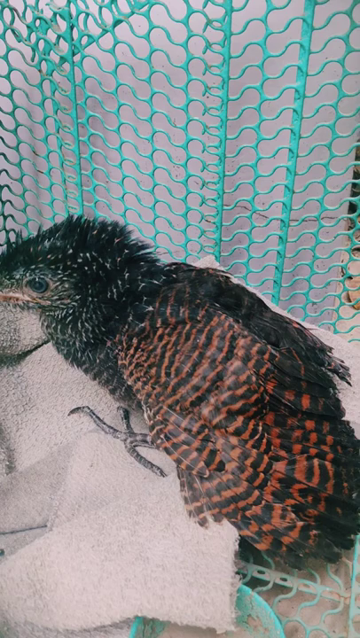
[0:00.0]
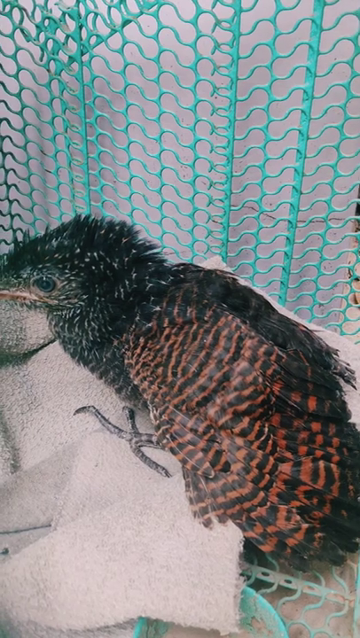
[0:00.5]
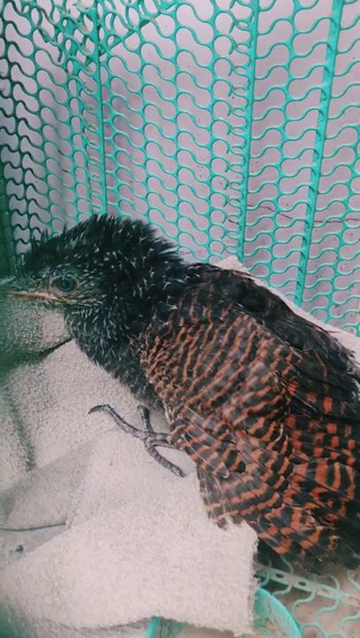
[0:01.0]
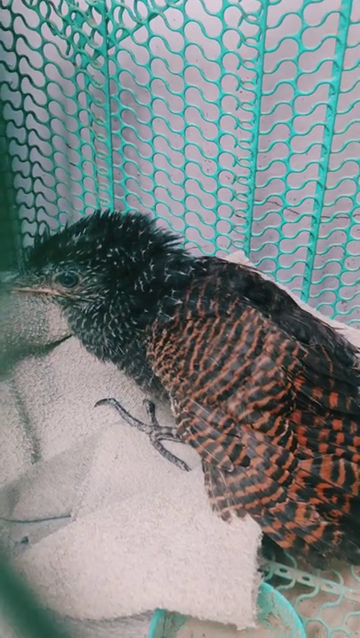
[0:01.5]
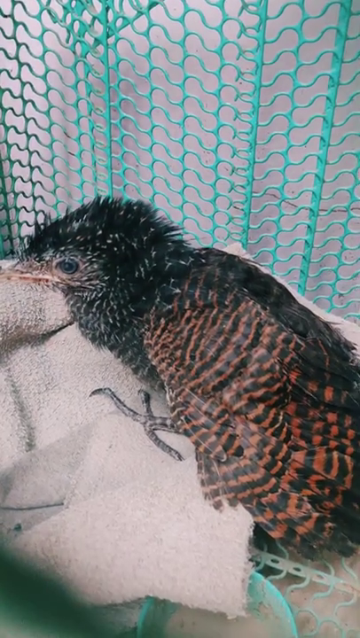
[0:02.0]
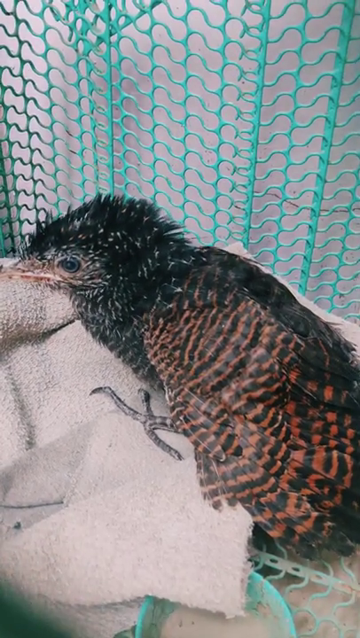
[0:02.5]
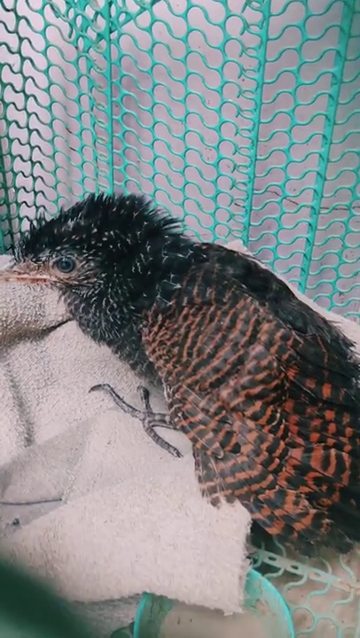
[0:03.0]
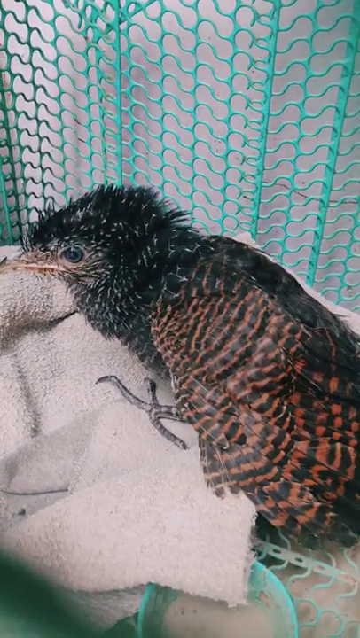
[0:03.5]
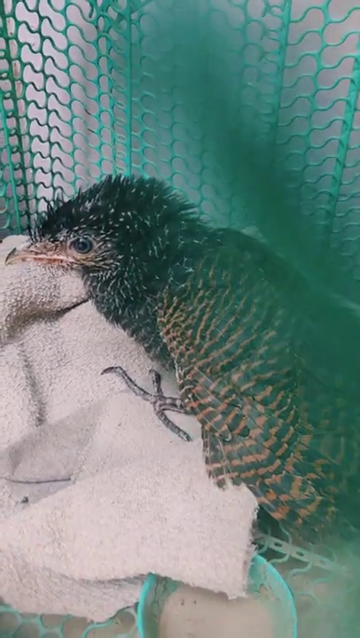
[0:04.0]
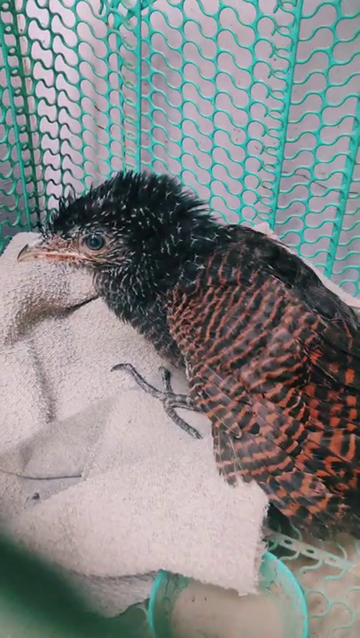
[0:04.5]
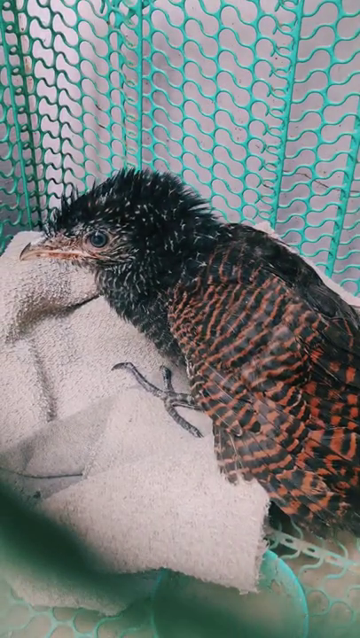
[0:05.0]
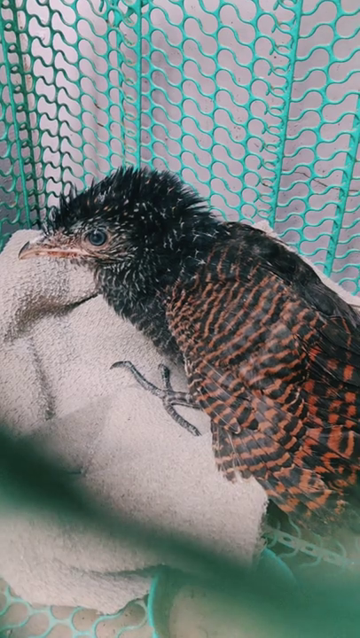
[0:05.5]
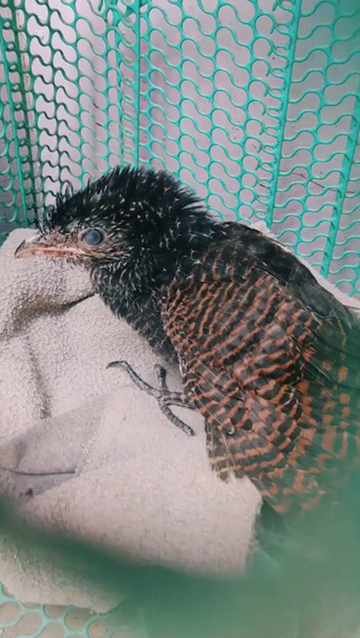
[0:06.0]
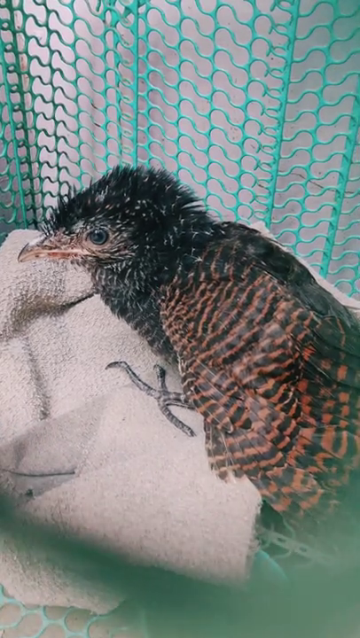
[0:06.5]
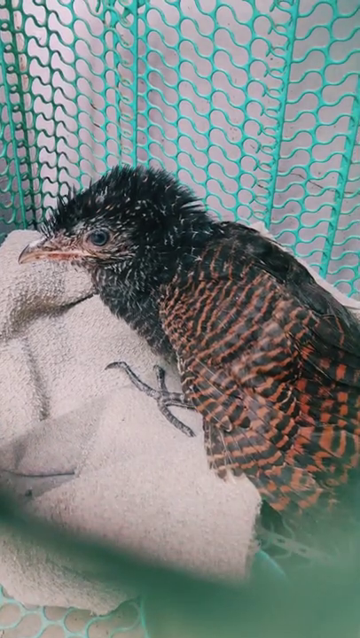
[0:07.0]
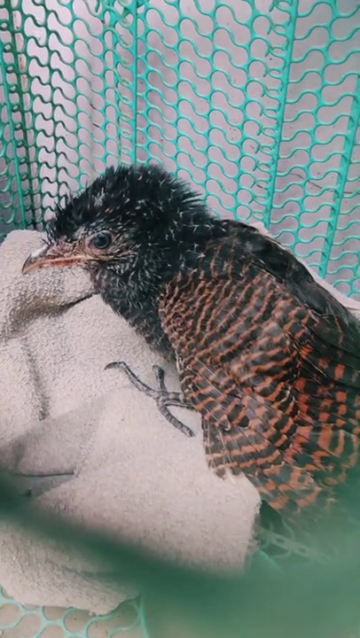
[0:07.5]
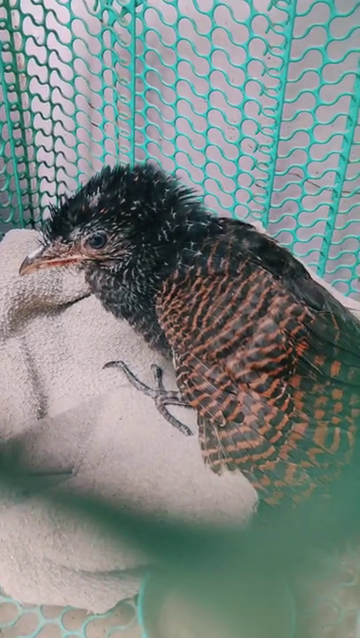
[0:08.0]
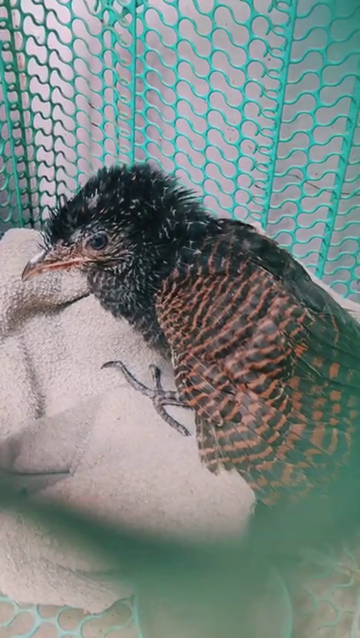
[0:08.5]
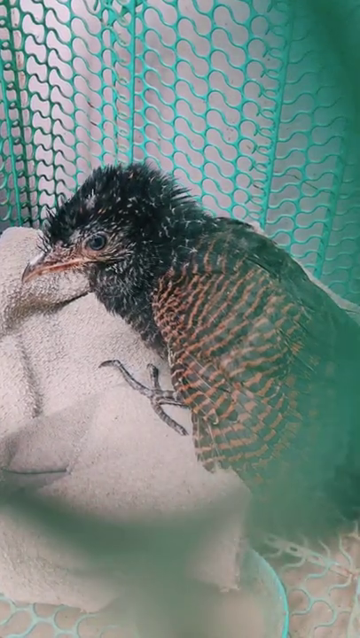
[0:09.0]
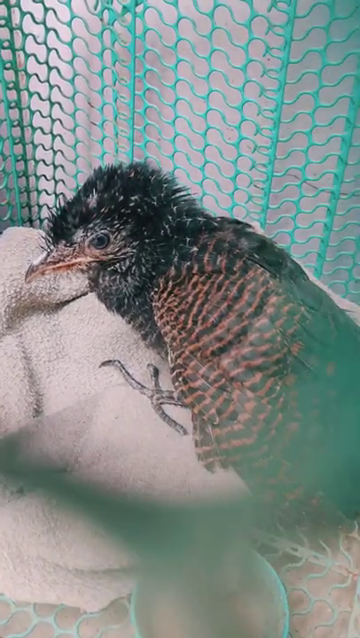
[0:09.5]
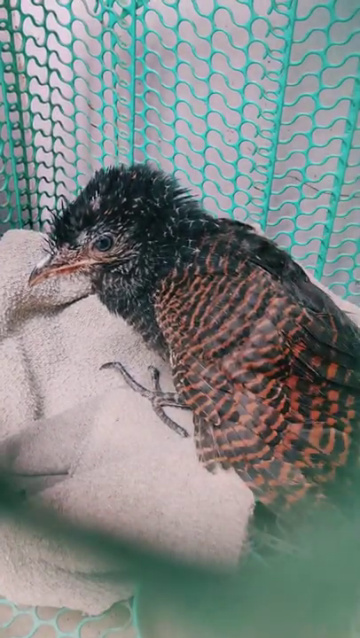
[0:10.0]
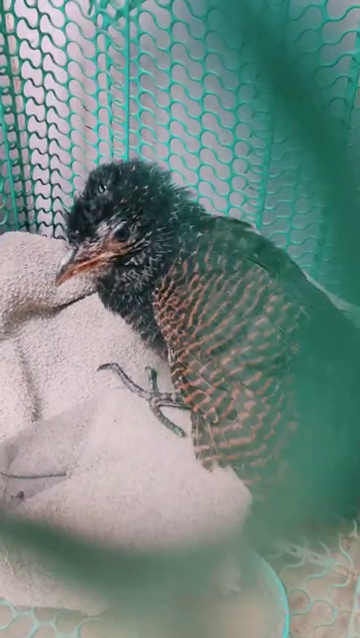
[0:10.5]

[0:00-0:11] What looks to be a baby turkey is inside a house, sat on top of some towels and surrounded by a makeshift gate. The turkey is mostly black with brown lines on its wings. It looks to be a bit wet, or maybe it was just born. It appears to be swallowing a bit heavily or having labored breathing. The person recording is filming through the gate, and part of the turquoise plastic the gate is made of is visible in the shot.